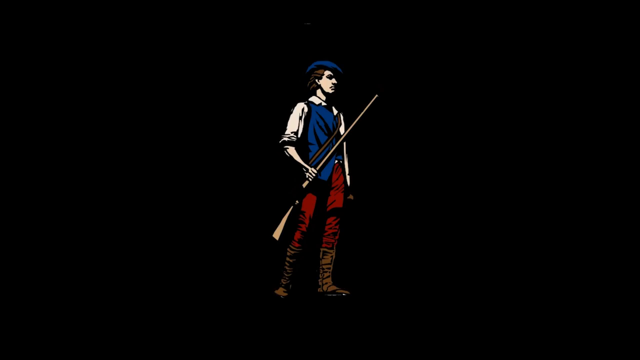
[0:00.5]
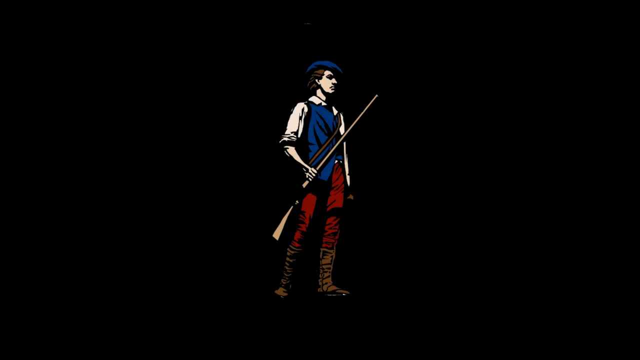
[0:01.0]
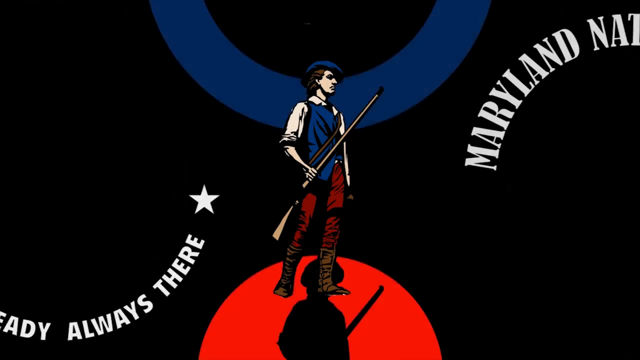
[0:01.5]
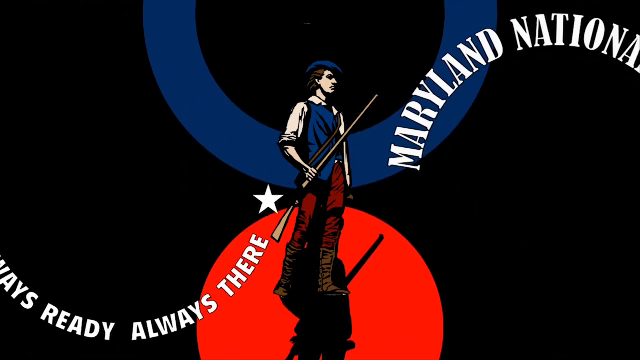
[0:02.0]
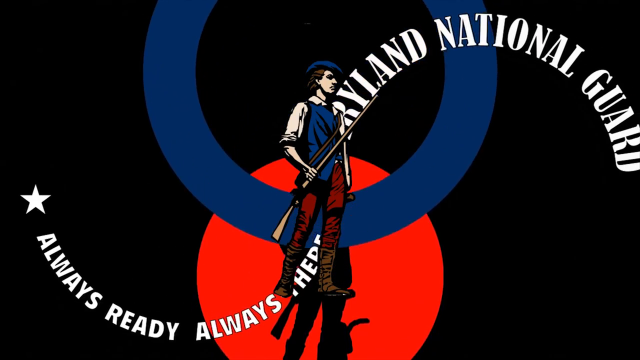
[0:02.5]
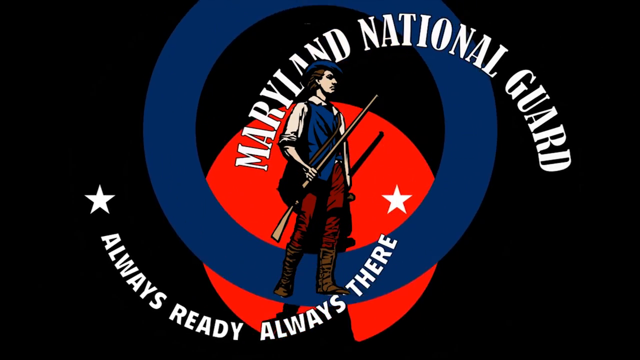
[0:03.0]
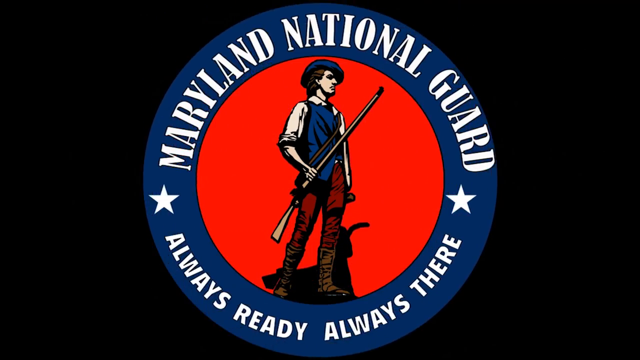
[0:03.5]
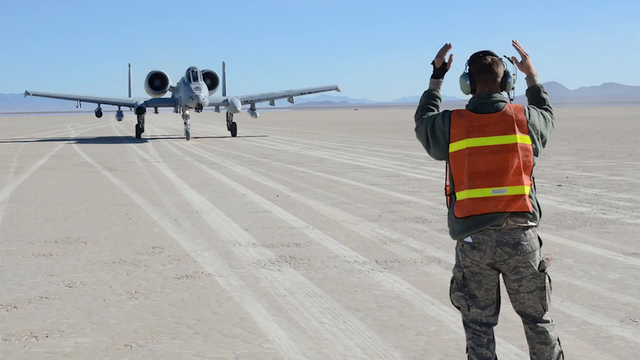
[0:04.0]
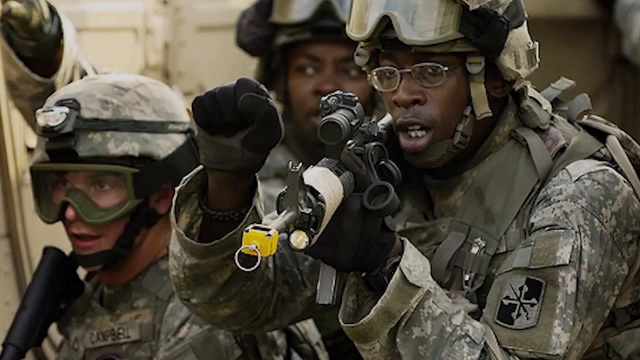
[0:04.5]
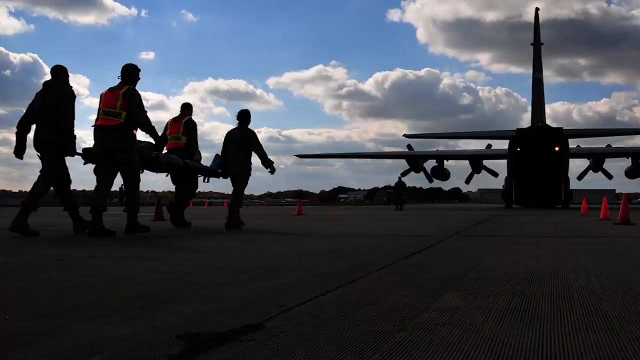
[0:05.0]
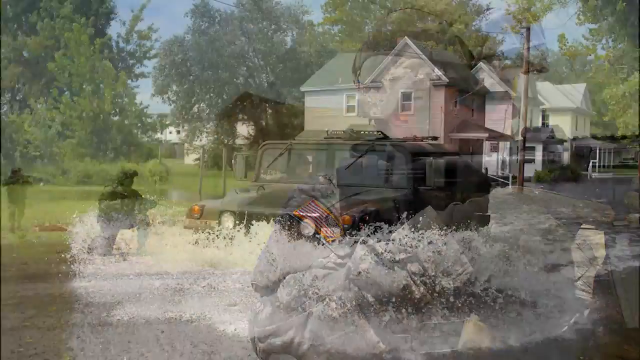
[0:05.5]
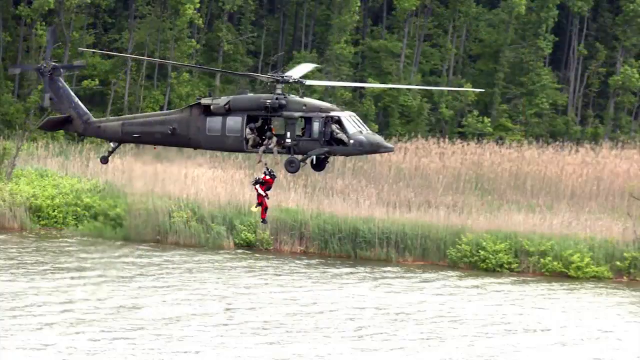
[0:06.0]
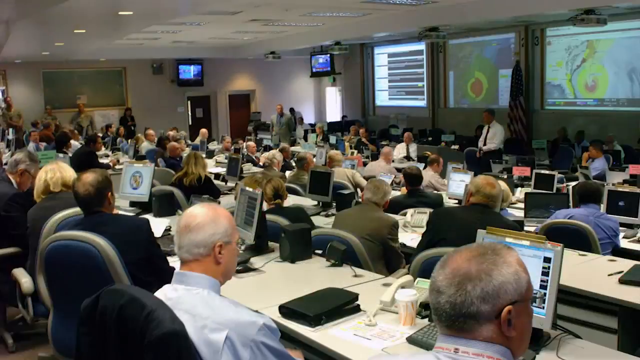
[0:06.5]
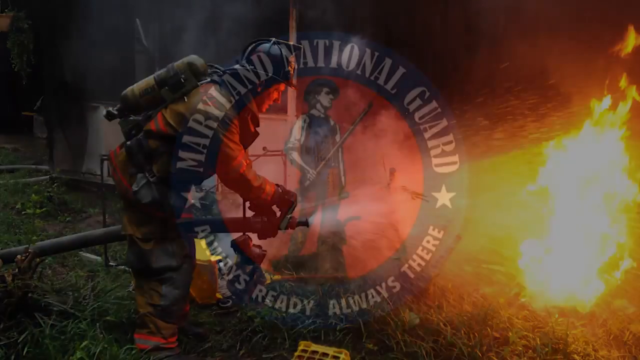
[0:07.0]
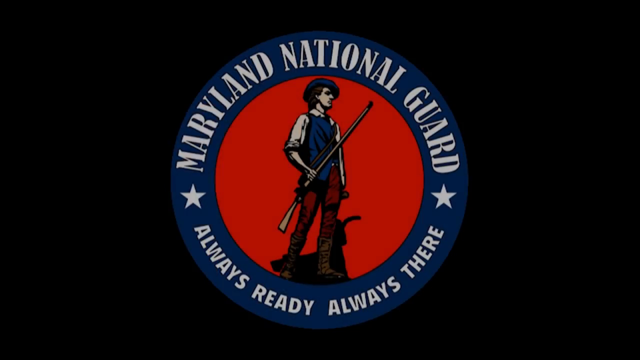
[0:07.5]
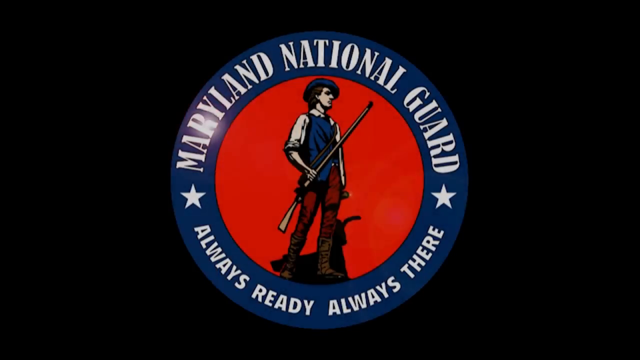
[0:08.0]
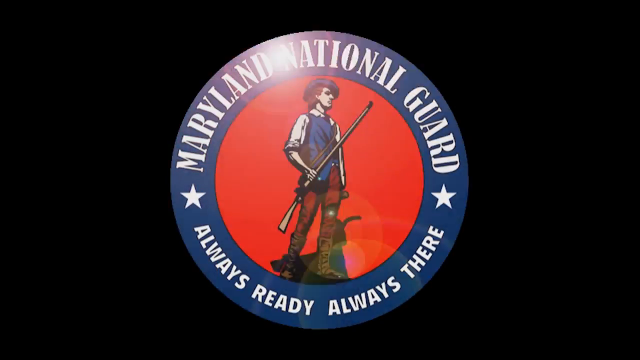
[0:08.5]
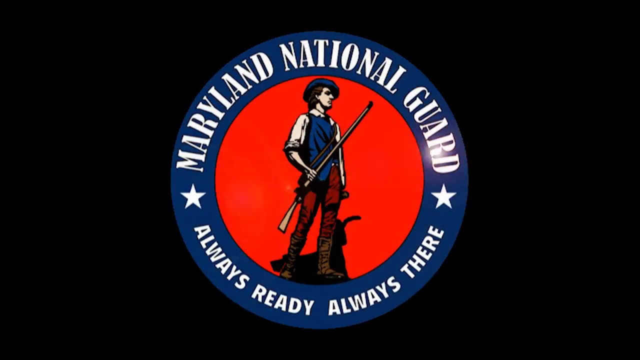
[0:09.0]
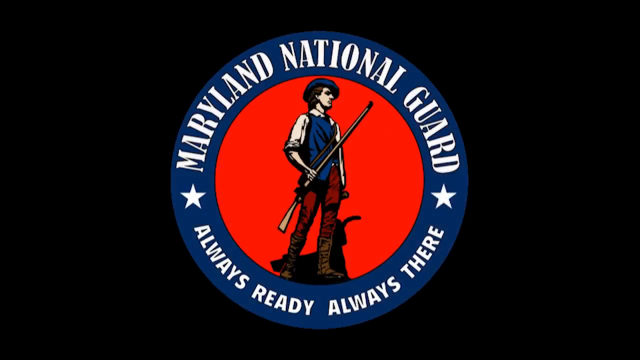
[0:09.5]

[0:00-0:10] A red and blue logo appears. The middle part is red and contains a cartoon picture of a man wearing brown boots, red trousers, a white and blue jacket and a blue cap, holding a rifle. The blue part has the words "Maryland National Guard. Always ready, always there" at the bottom, with stars on the right and left sides. Next, an aeroplane is about to land while a man stands there indicating the landing of the plane. Soldiers in uniform appear; there are three of them, two black and one white, and one is holding a gun. Four paramedics carry someone on a stretcher, walking towards an aeroplane that is landing, and a man is standing beside the aeroplane. Some soldiers hold their rifles, and then three houses appear next to each other on a road flooded with water. A car passes through the water, there are more aircraft, and a firefighter is trying to put out a fire with a hose pipe.